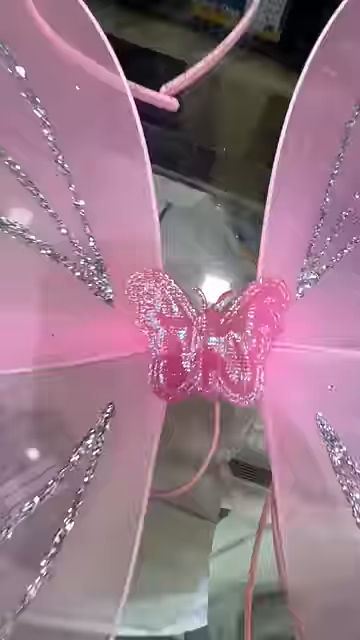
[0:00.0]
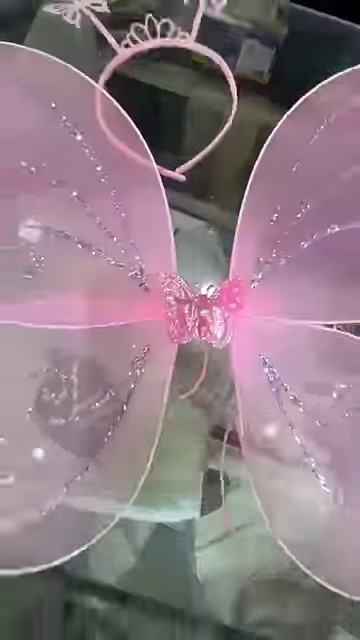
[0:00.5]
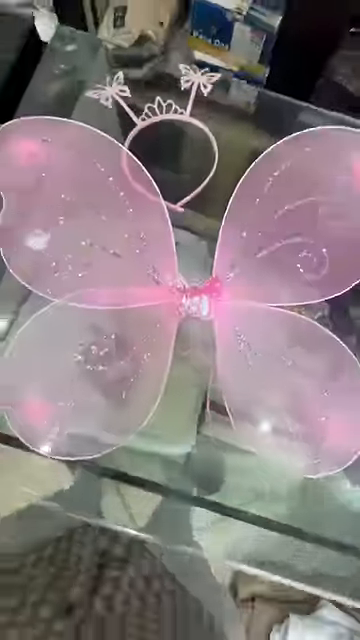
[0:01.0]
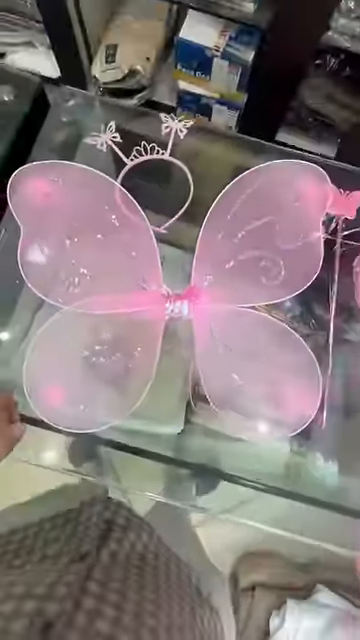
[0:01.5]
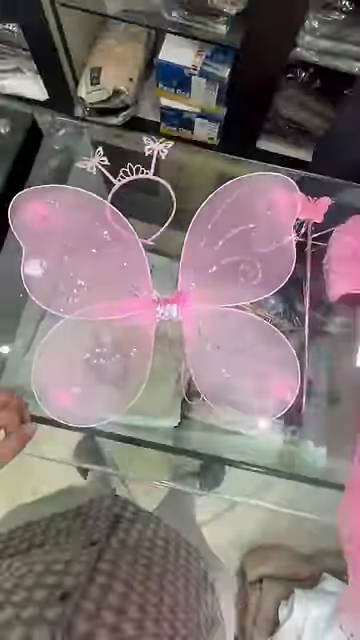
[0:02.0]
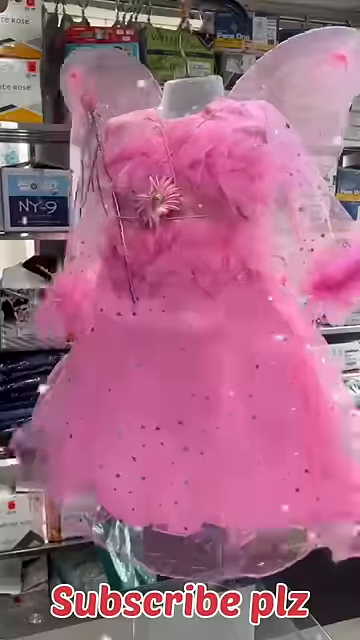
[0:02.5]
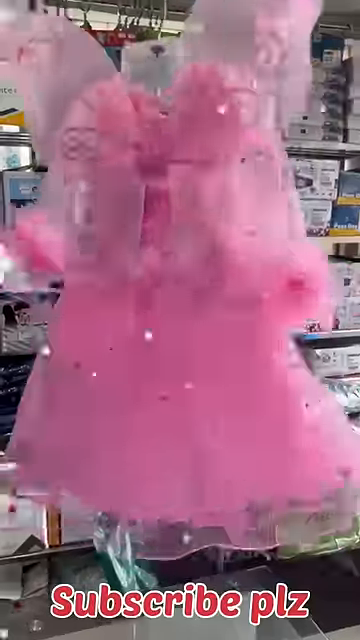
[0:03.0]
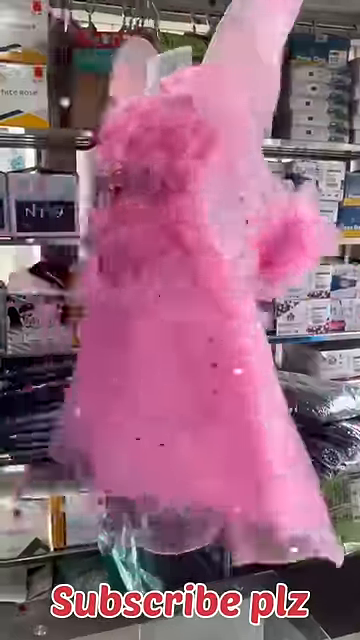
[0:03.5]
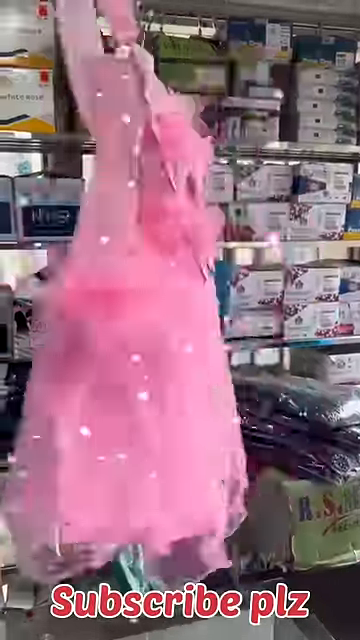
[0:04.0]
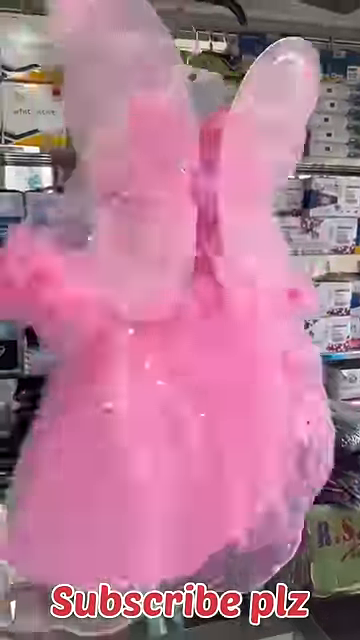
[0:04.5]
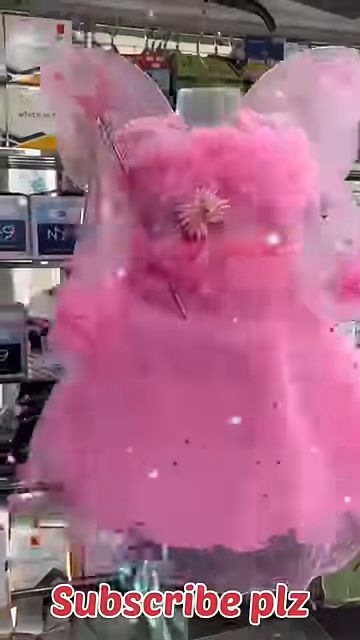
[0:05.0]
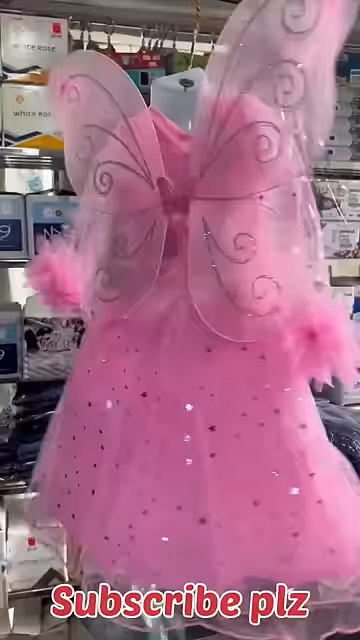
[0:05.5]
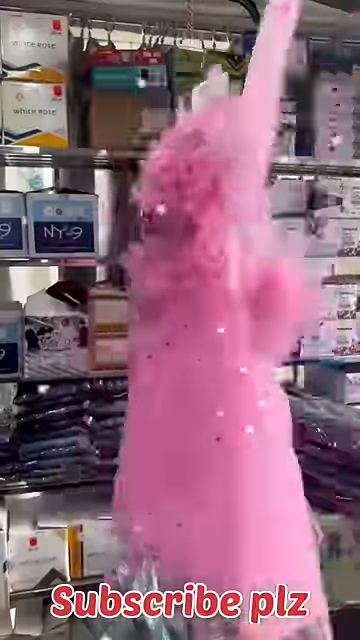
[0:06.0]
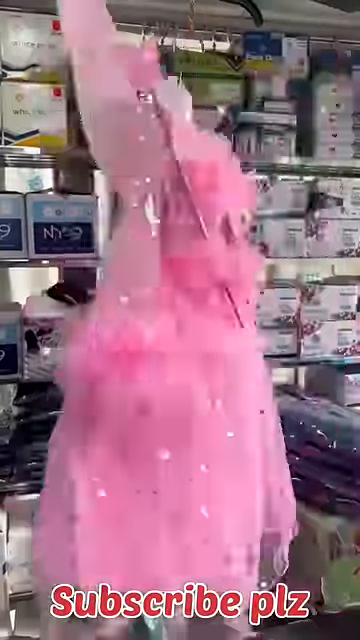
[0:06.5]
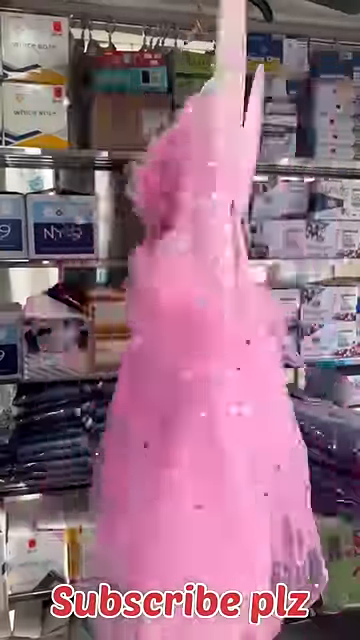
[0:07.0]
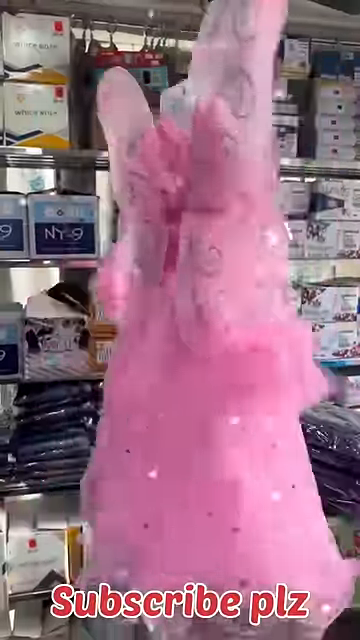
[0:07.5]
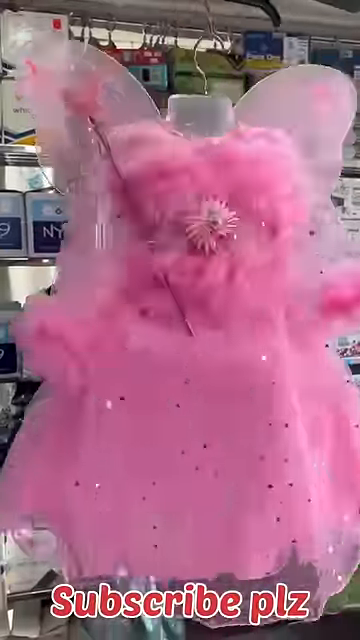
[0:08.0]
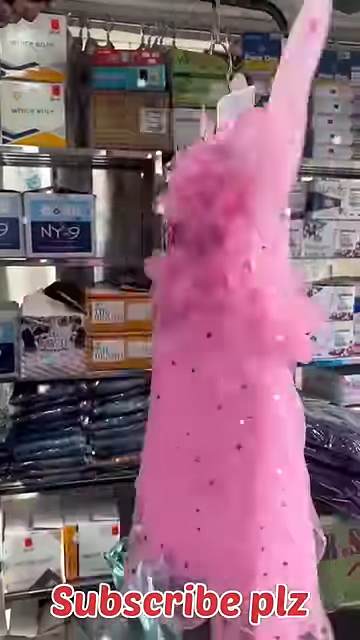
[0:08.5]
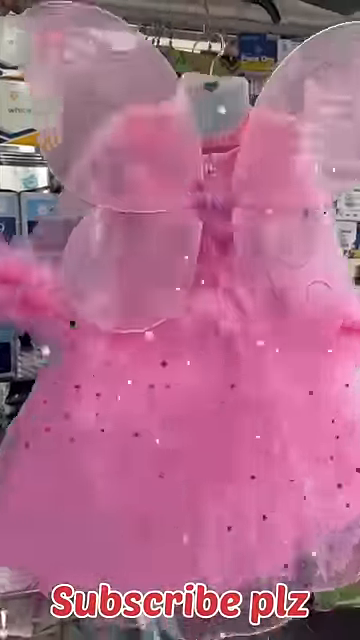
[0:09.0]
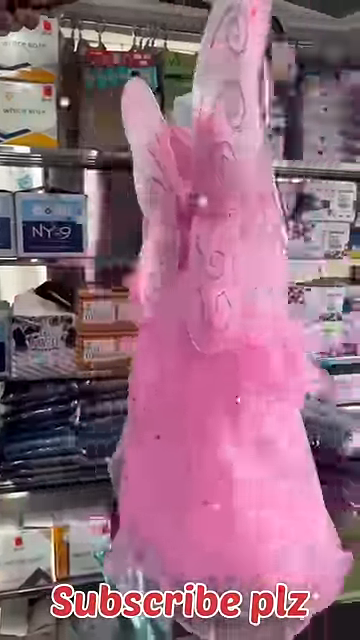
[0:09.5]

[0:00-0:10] In what looks like a TikTok video, a pink children's dress with butterfly wings on it seems to float around, doing spins. Text at the bottom says "subscribe, please". The setting appears to be some sort of back room of a store. The video is possibly meant to promote a clothing brand, perhaps one selling young girls' clothing, or possibly comes from a how-to channel showing the dress's creation.